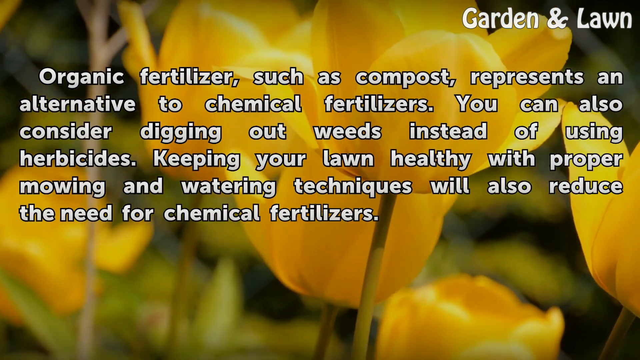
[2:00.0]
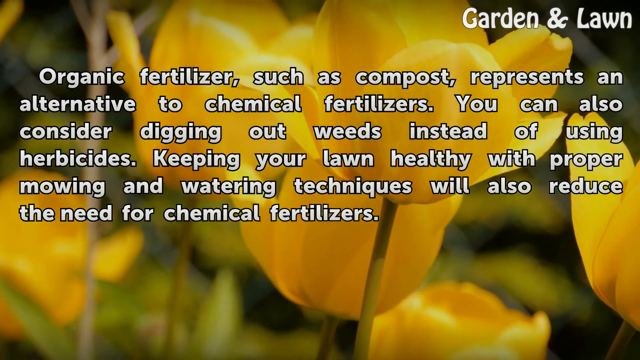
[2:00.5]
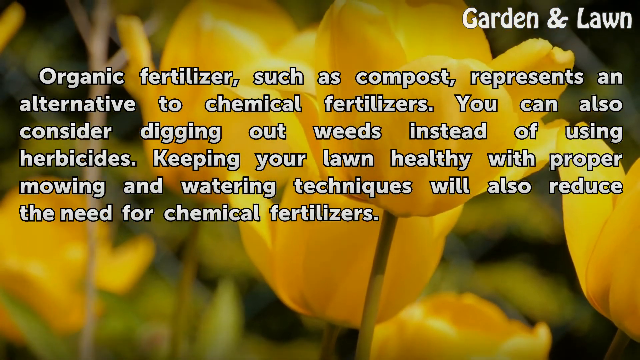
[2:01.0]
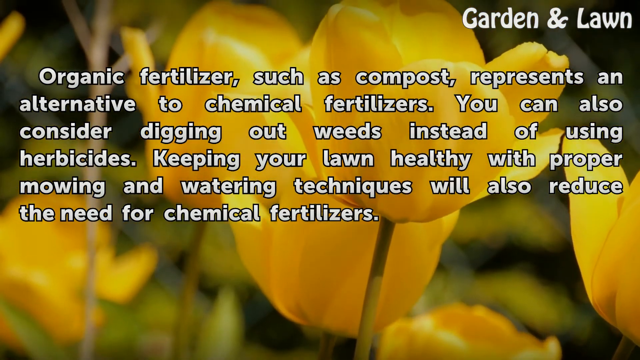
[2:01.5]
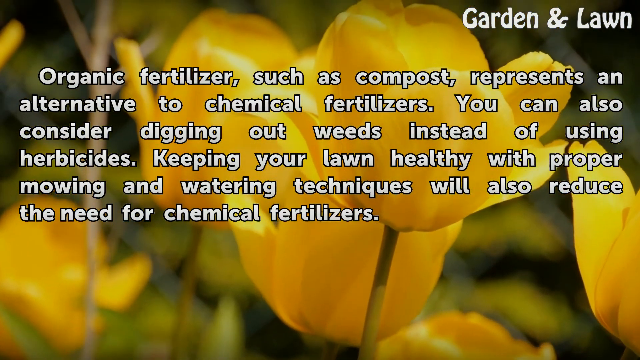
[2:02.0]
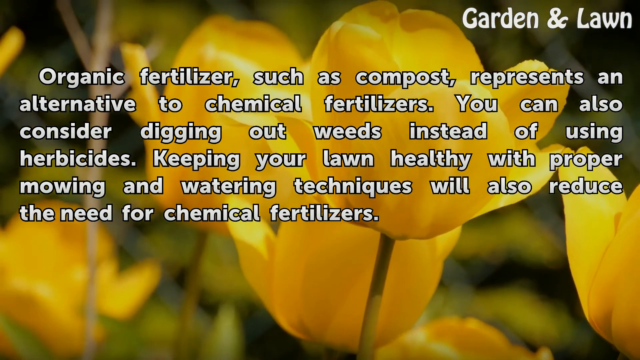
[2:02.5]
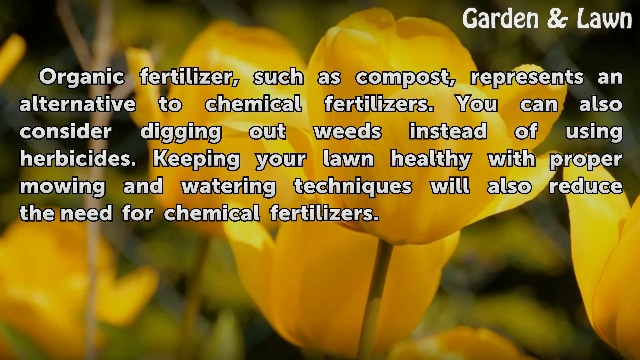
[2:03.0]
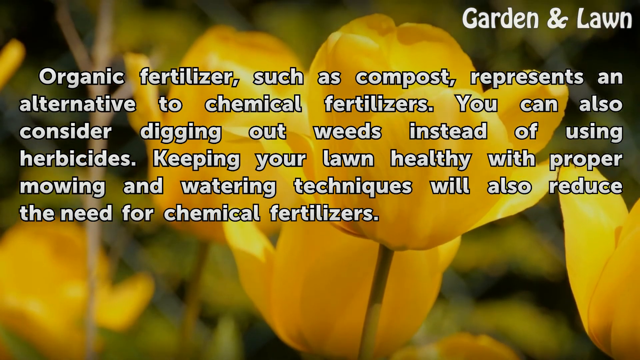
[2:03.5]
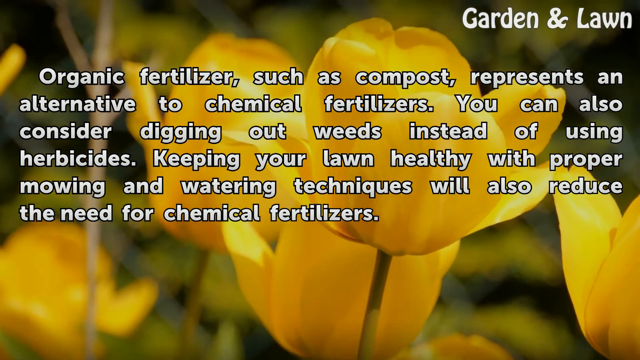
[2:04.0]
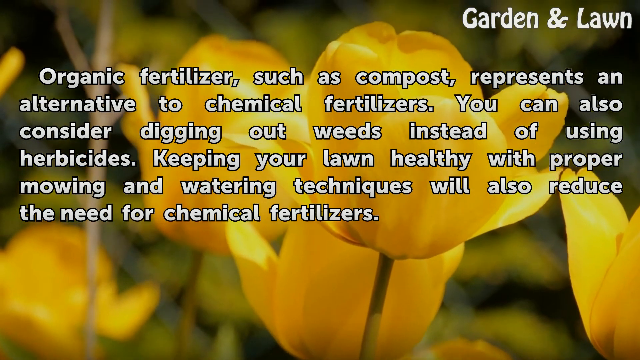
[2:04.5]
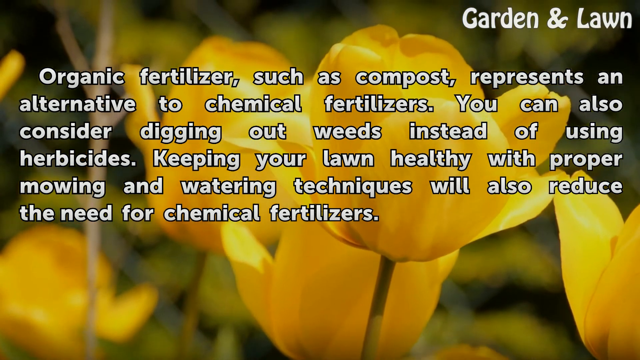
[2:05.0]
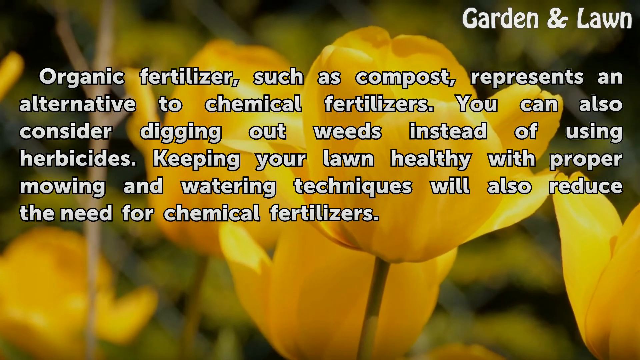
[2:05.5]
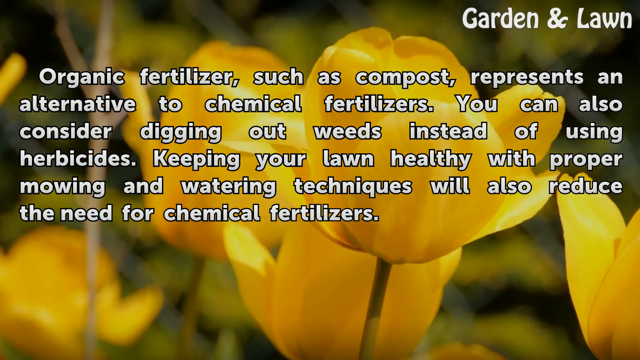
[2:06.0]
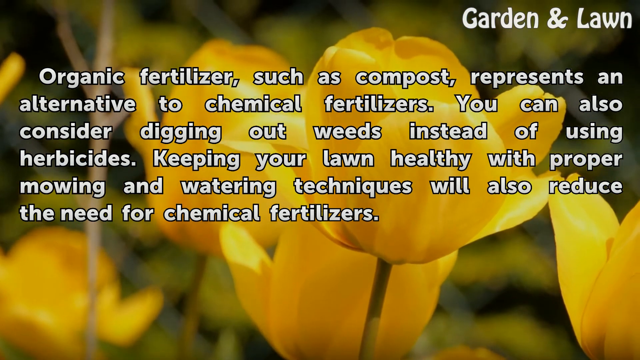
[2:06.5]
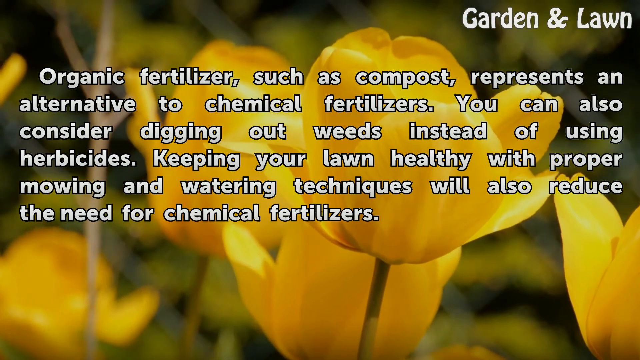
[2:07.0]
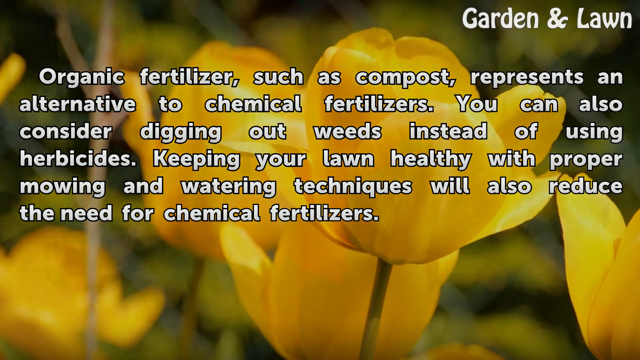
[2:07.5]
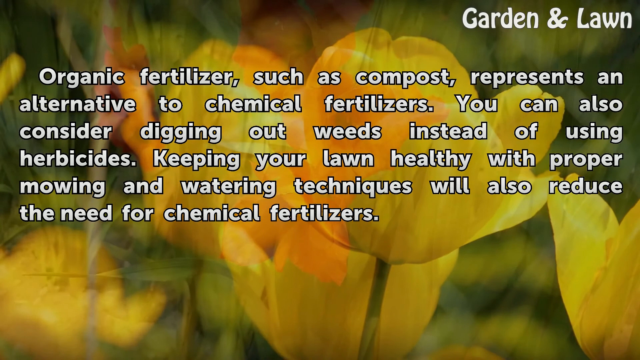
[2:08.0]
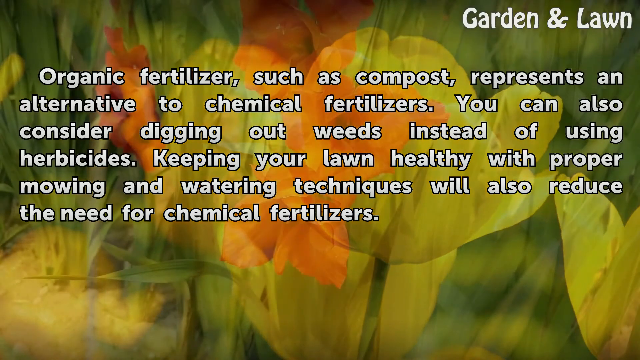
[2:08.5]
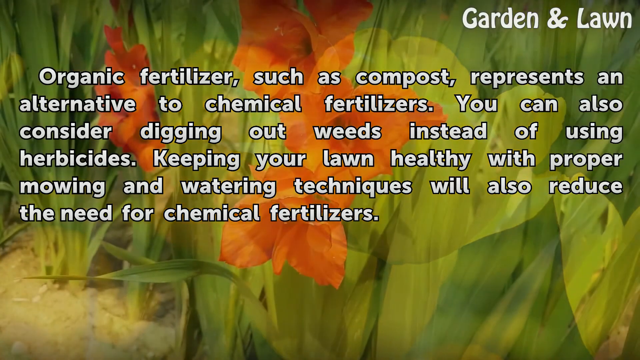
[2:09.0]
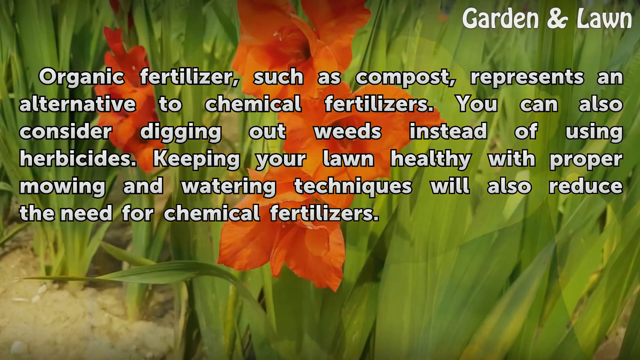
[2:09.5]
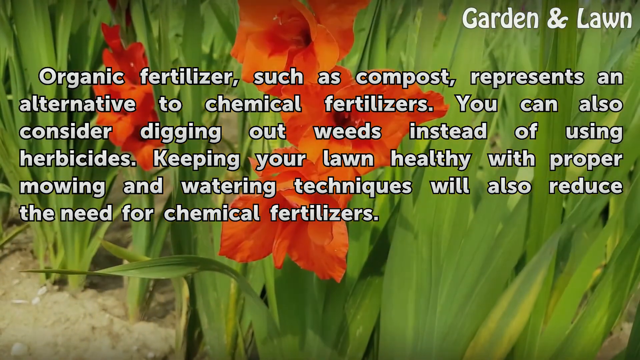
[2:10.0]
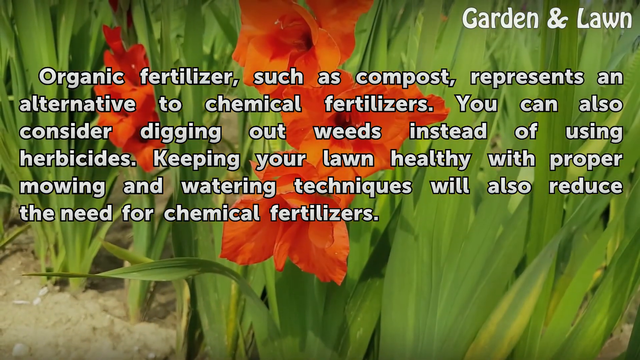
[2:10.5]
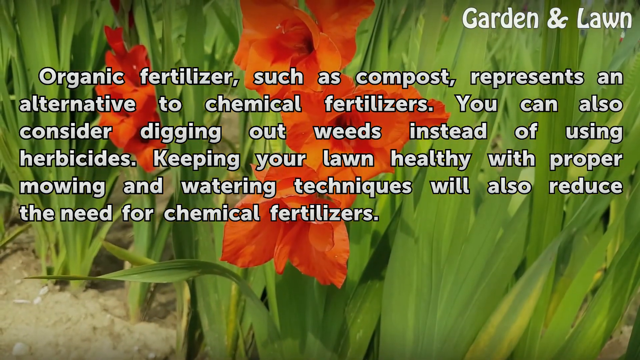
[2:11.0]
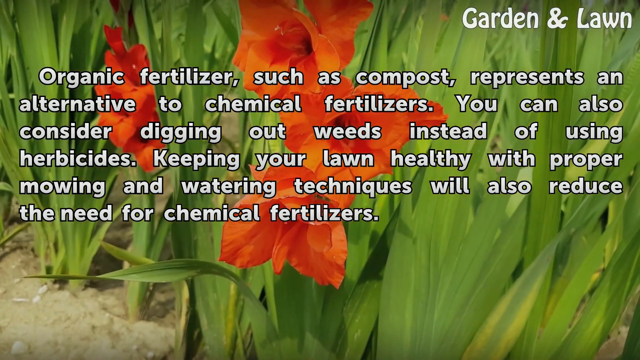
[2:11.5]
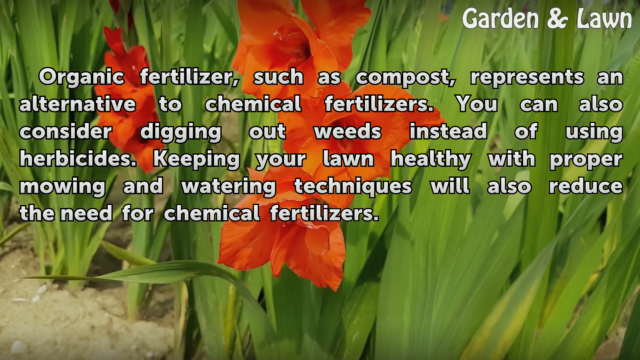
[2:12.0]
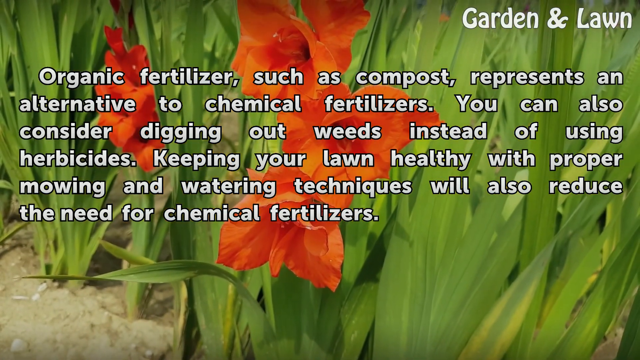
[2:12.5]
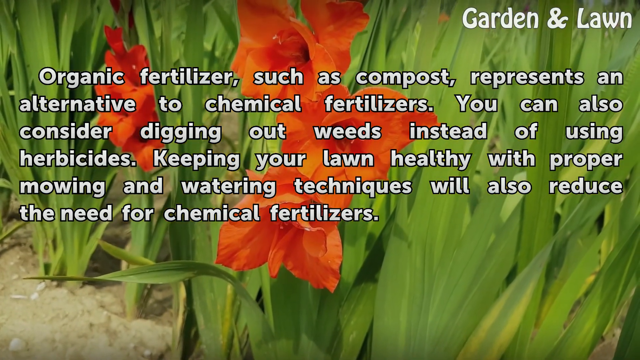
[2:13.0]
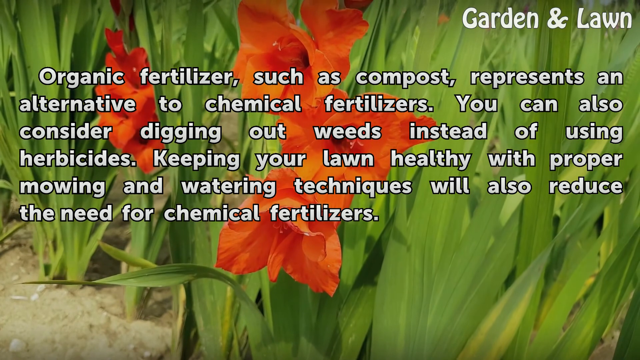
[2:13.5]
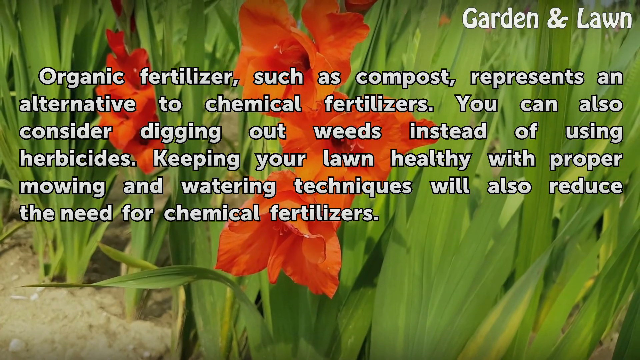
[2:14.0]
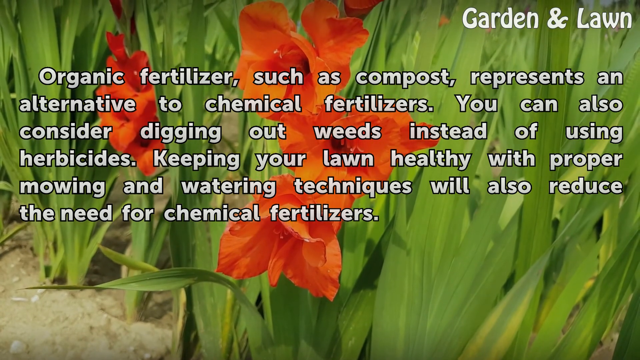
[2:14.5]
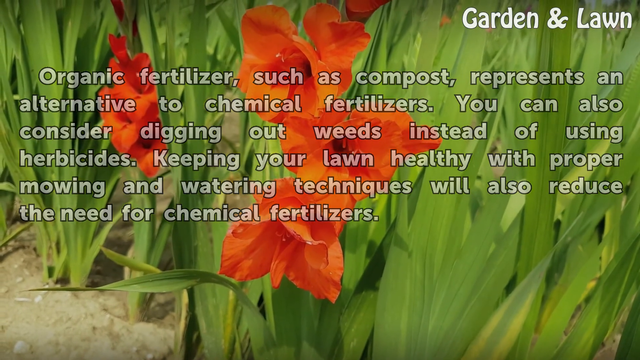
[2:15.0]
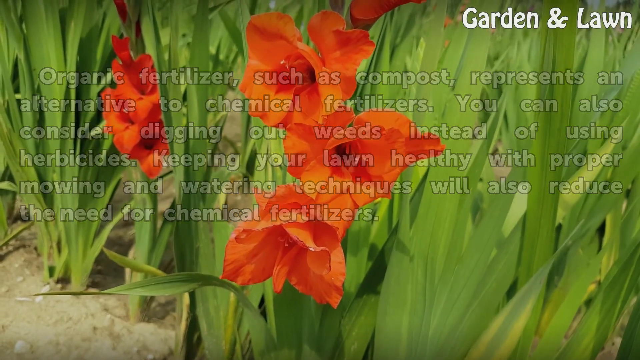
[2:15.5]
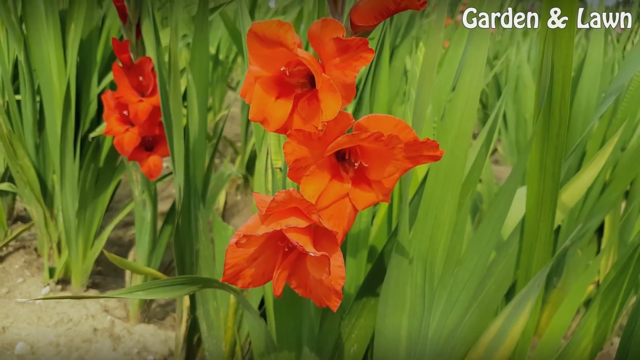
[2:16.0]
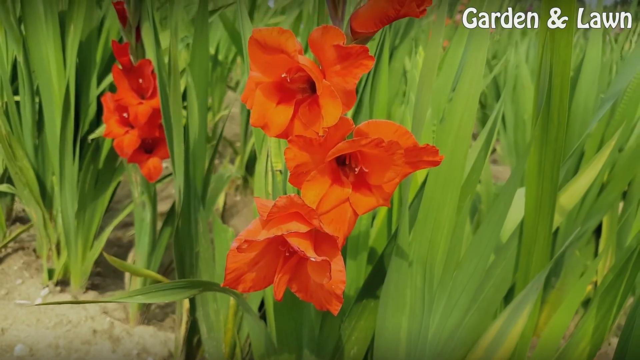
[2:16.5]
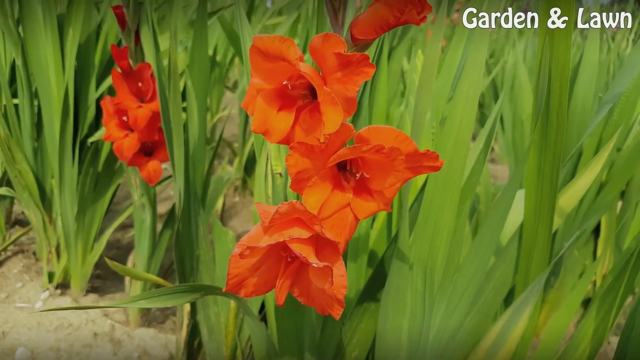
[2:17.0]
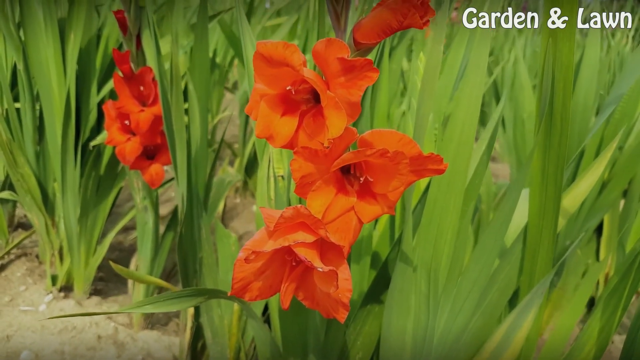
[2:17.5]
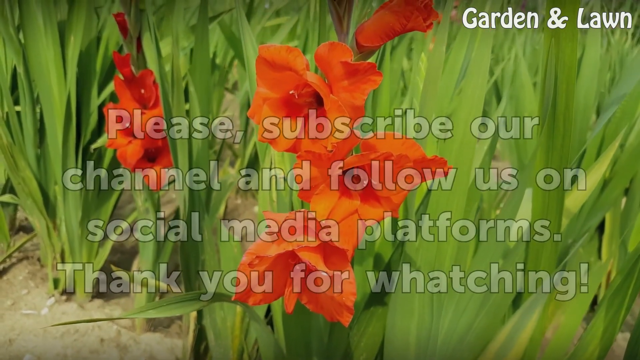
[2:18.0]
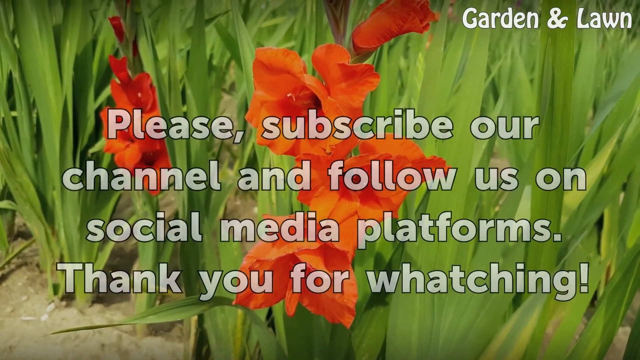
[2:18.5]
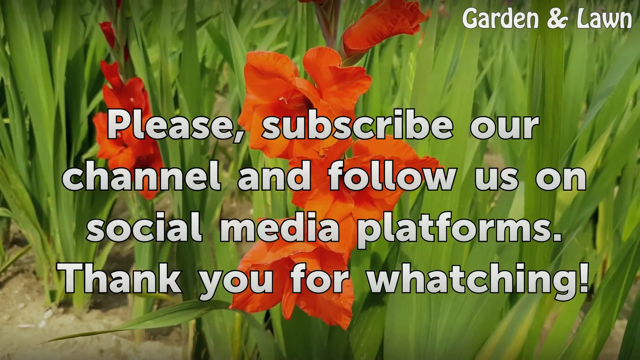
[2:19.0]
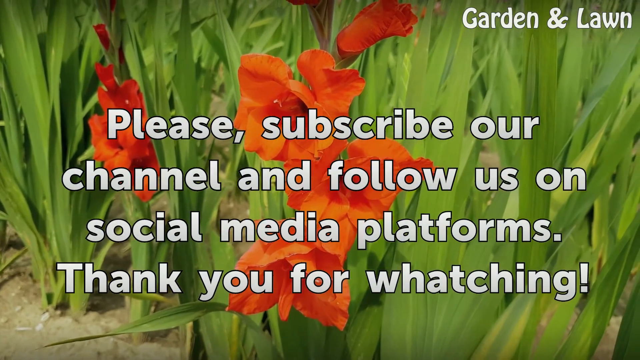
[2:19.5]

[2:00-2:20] The background changes to red flowers in the centre with many leaves in the background, in a shot angled towards the ground. Text appears reading "please subscribe our channel and follow us on social media platforms. Thank you for watching."